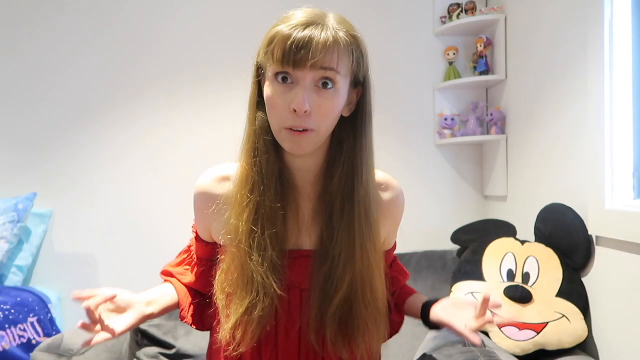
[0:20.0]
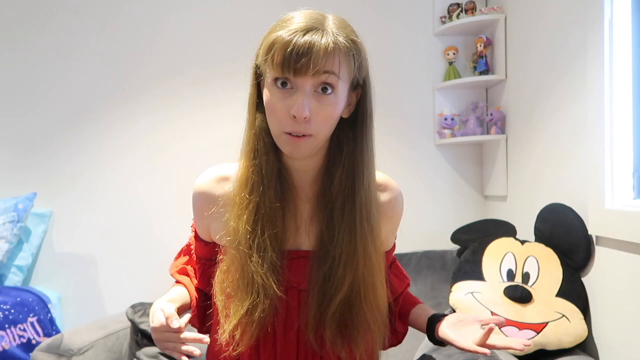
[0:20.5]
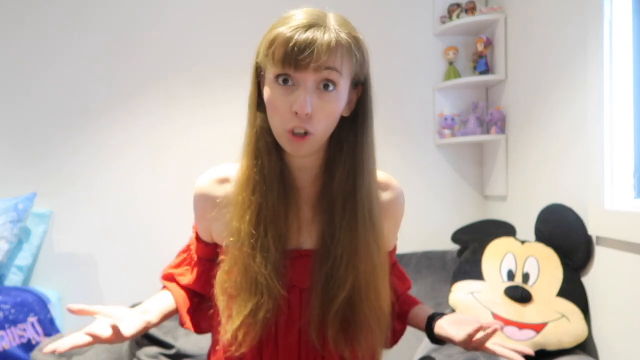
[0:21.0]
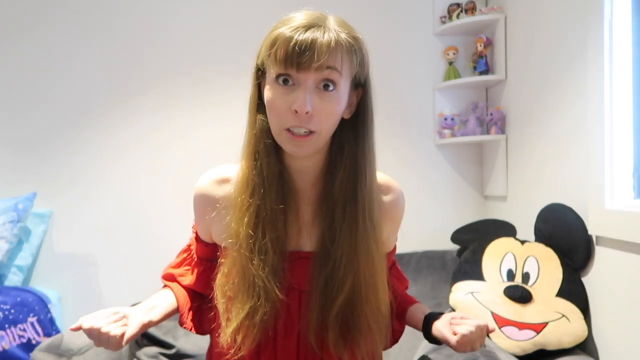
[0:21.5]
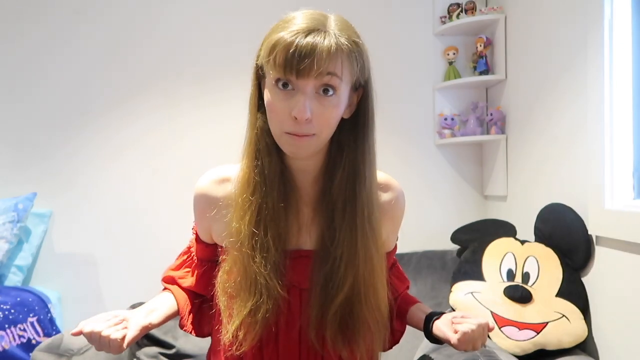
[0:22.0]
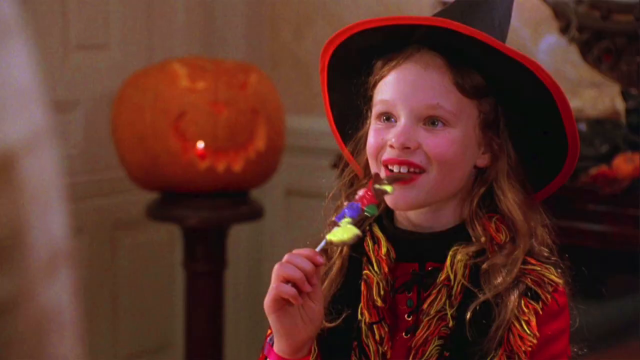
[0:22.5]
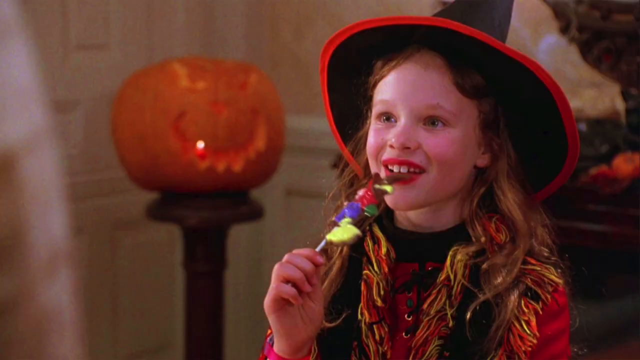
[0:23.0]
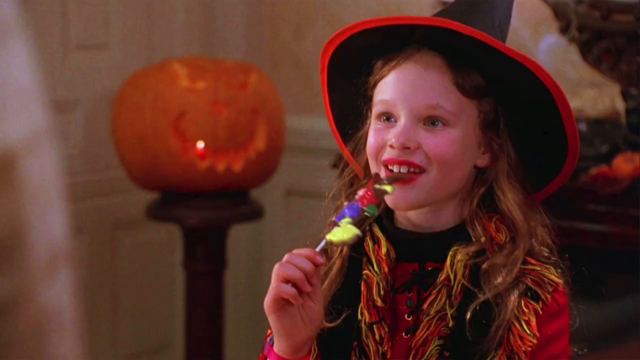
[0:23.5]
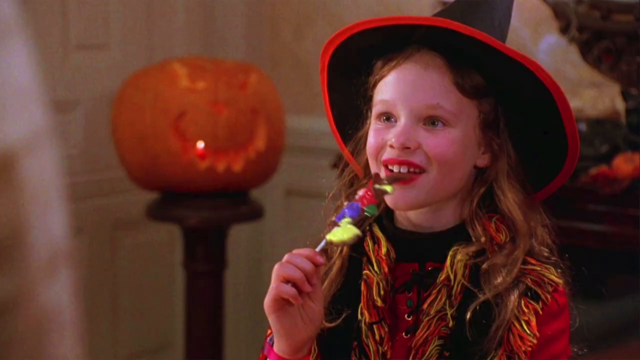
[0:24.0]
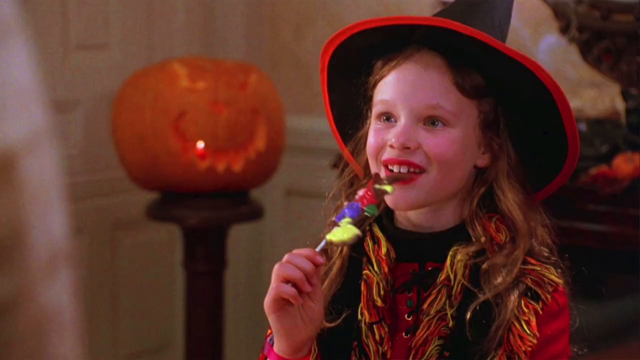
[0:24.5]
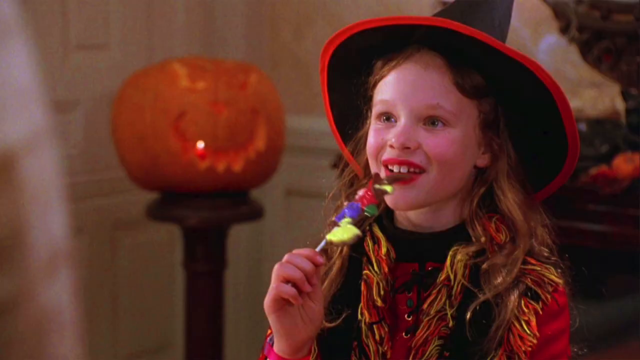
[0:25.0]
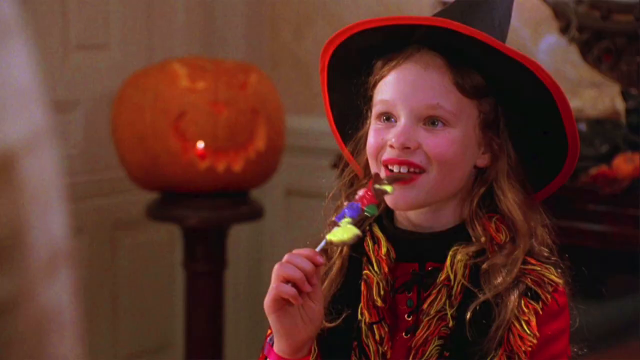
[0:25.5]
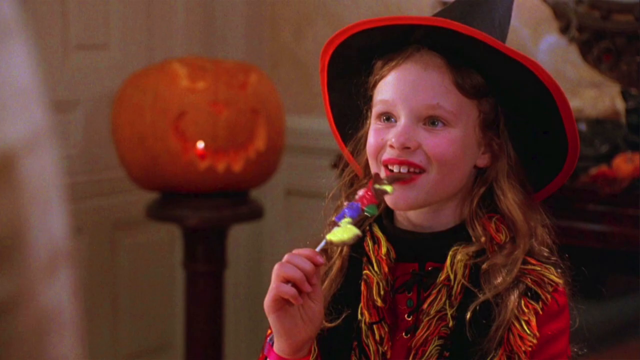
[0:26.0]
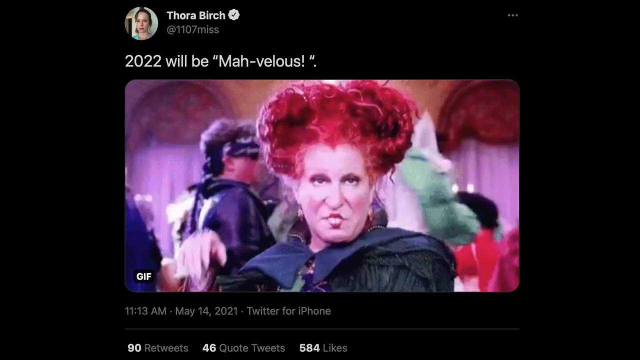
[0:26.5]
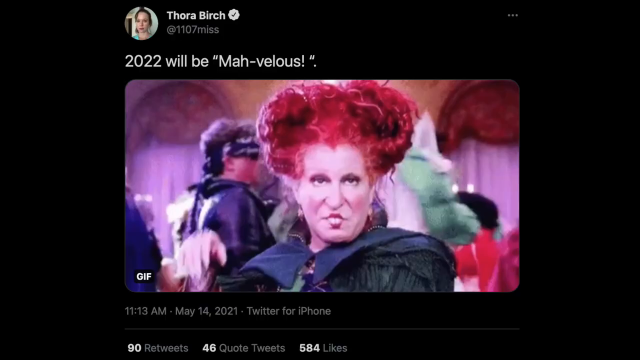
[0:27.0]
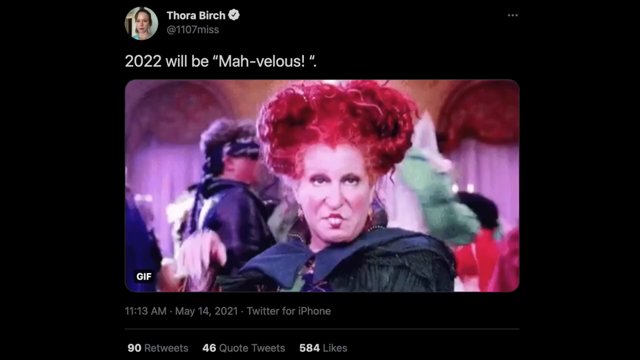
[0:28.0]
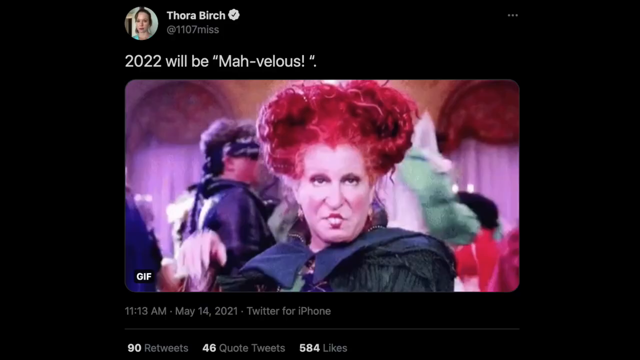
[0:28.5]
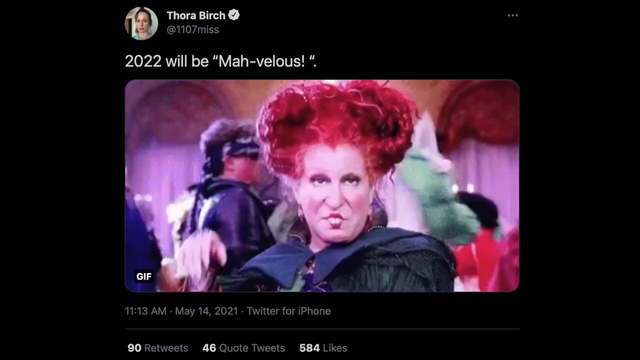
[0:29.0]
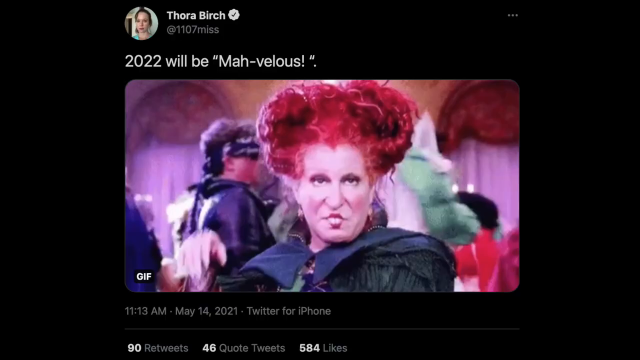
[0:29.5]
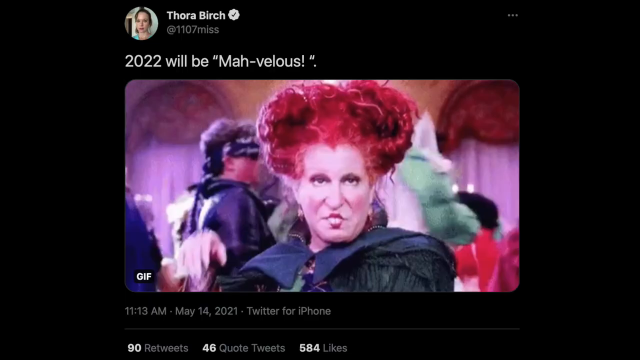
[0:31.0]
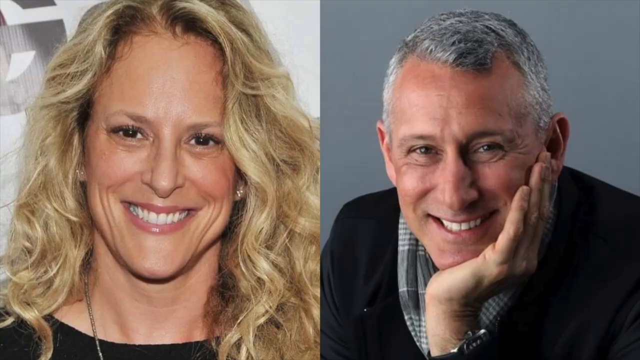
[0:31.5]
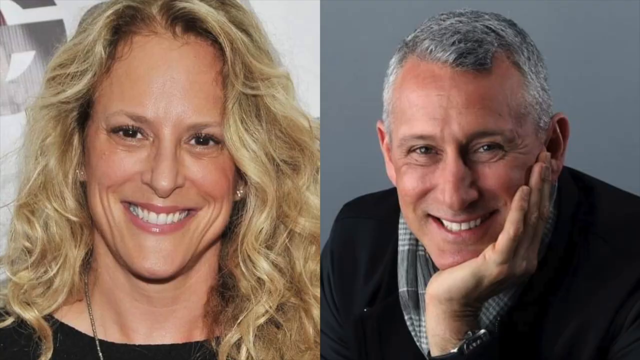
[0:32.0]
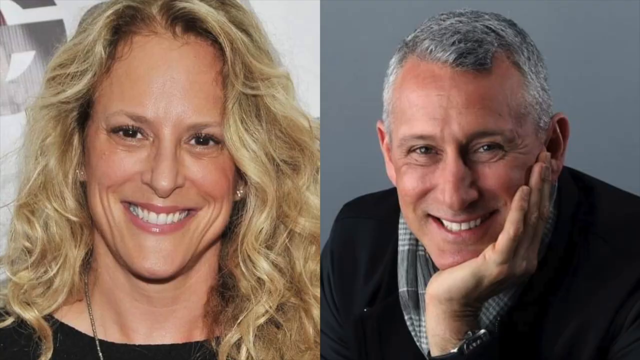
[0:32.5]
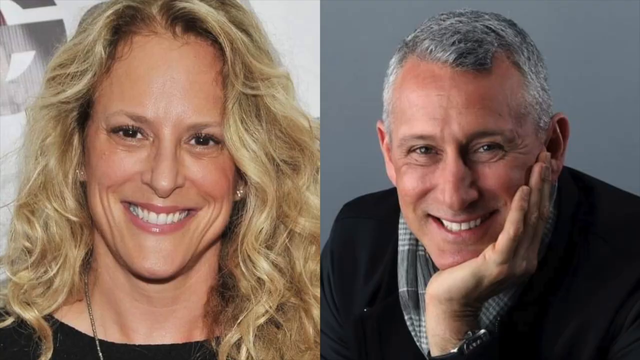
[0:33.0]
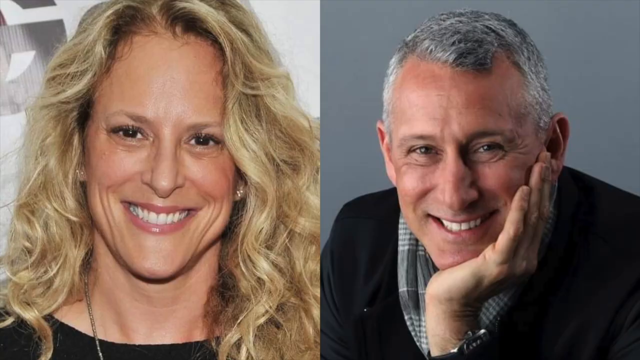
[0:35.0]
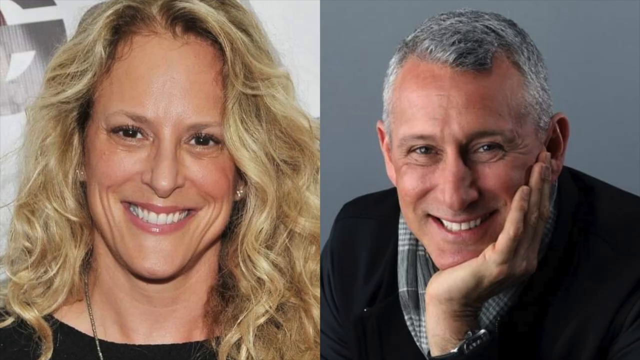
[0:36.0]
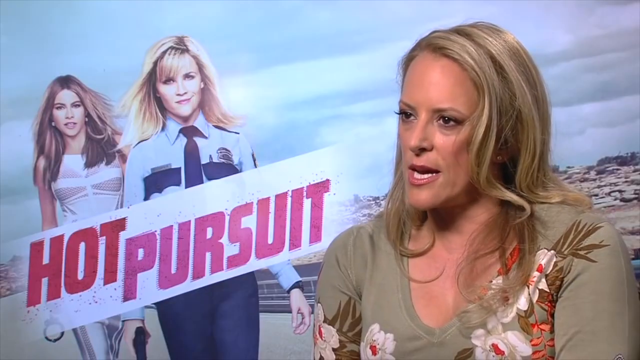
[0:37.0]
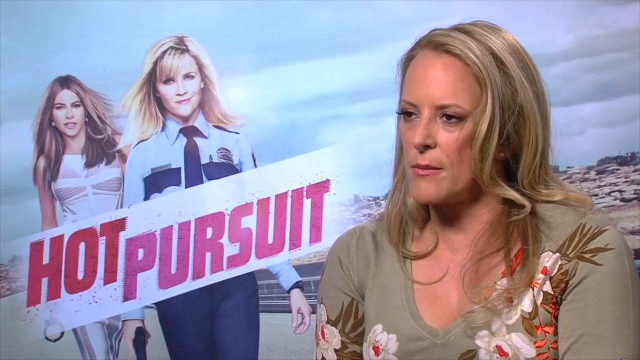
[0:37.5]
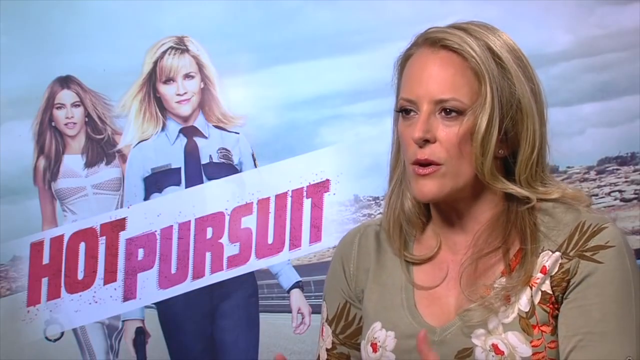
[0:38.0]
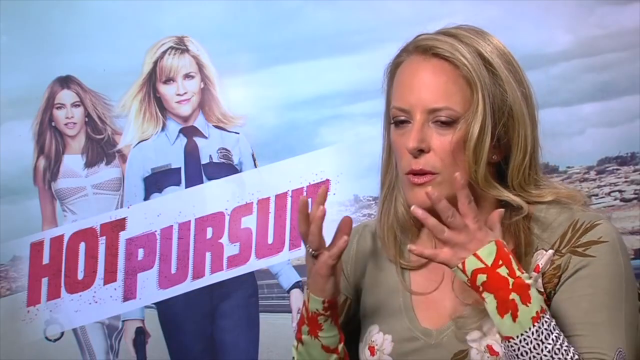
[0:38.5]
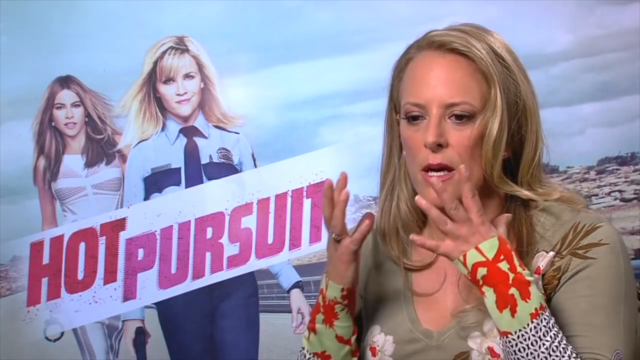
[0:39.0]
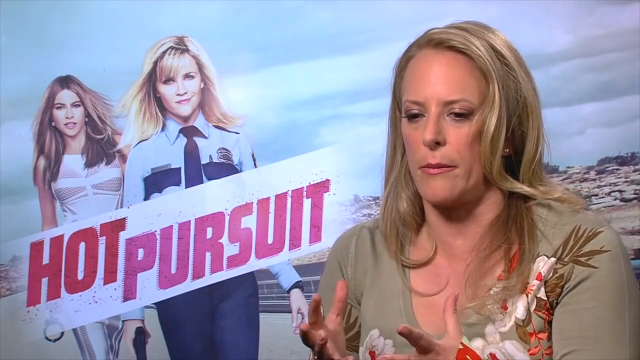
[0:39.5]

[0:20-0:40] A young child wears a witch costume, and it looks like Halloween night. A lit pumpkin has a carved face with teeth. Then "2022 will be marvelous" appears. A woman with red hair wearing all black also looks like a witch; behind her are little people, some wearing black, others red and others blue. This is shown as a GIF picture. Two people appear, a woman and a man: the woman with blonde hair smiles, and the man in a black suit and a check scarf is sitting, holding his hand to his cheek. Then a person is shown narrating about a character.